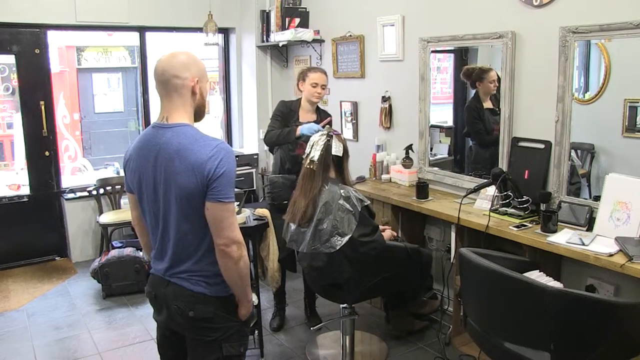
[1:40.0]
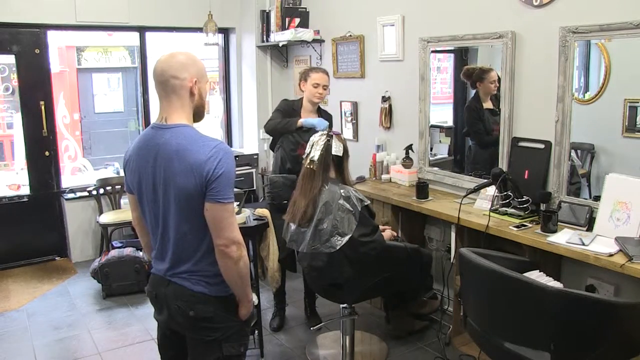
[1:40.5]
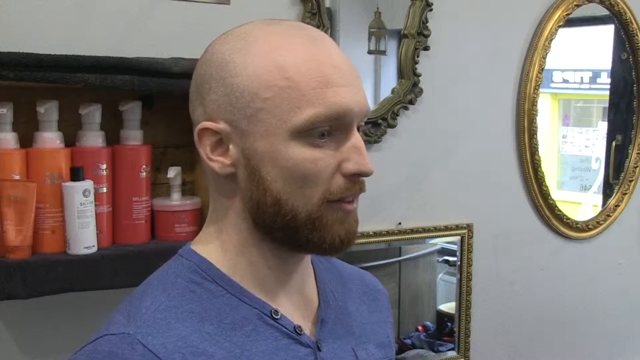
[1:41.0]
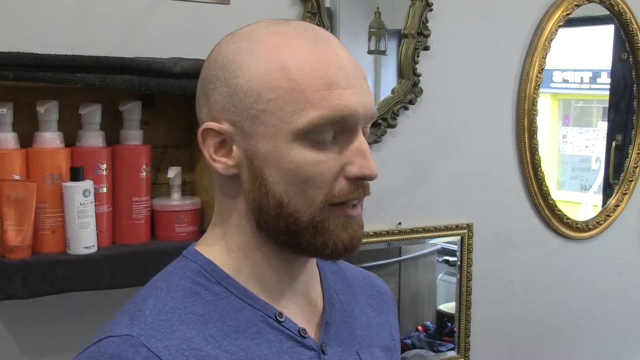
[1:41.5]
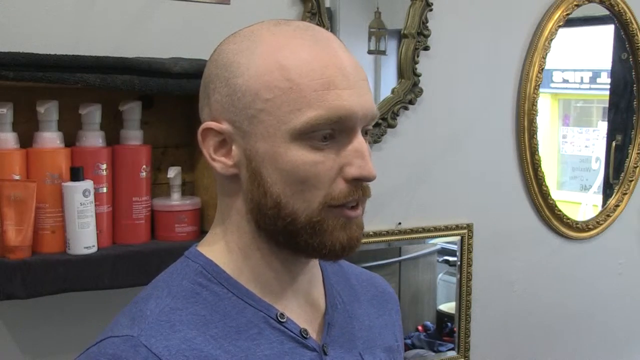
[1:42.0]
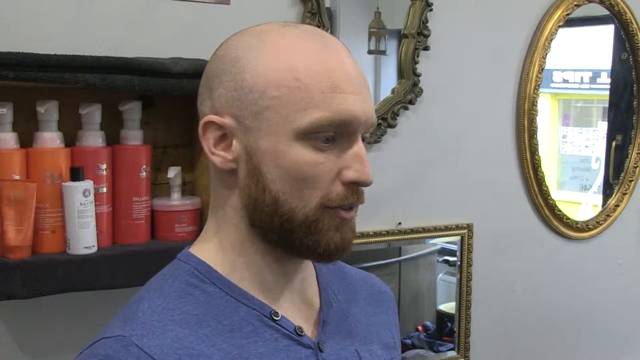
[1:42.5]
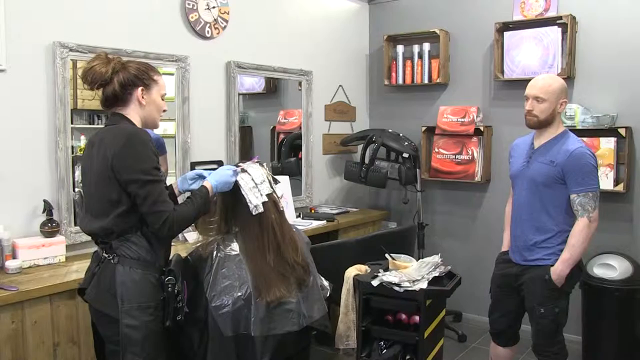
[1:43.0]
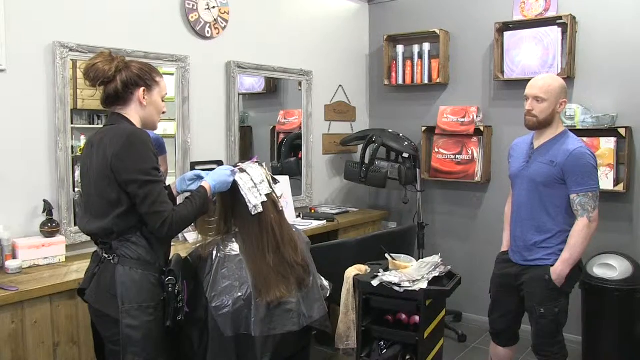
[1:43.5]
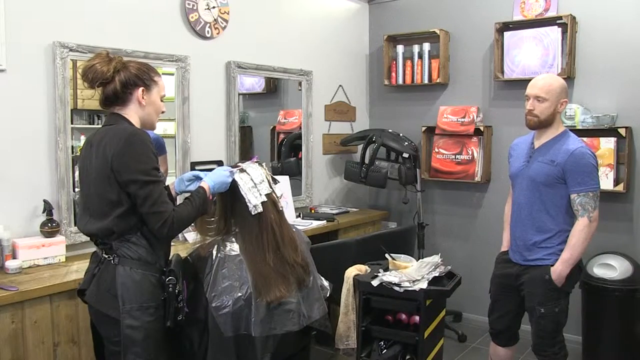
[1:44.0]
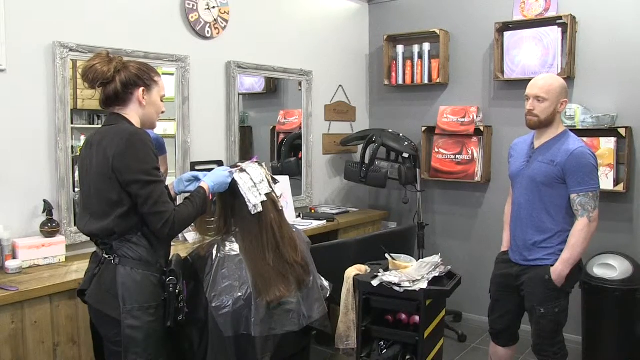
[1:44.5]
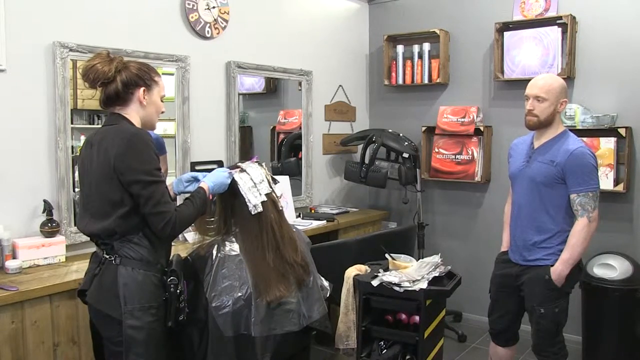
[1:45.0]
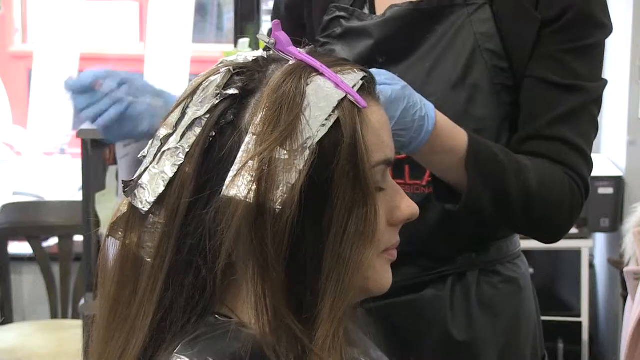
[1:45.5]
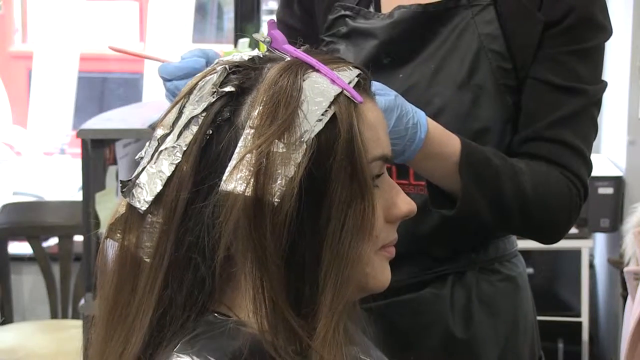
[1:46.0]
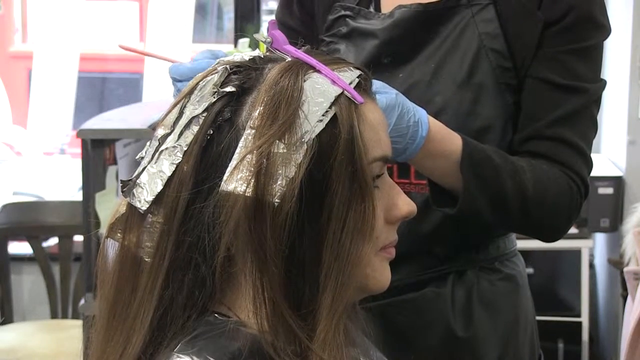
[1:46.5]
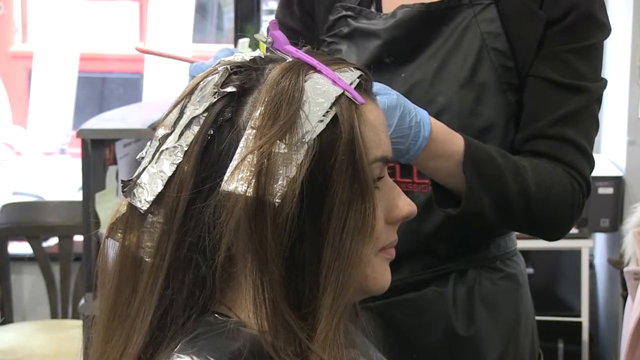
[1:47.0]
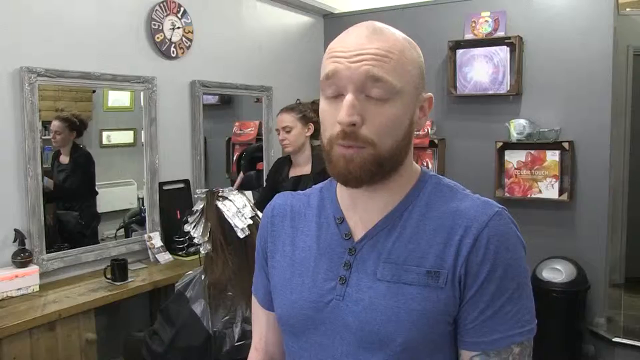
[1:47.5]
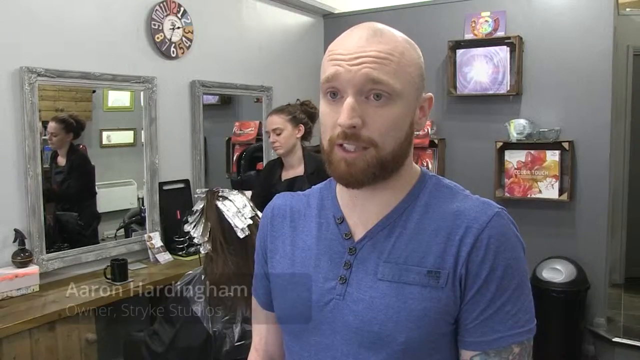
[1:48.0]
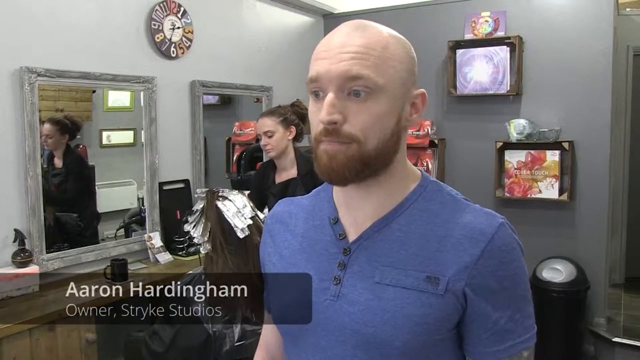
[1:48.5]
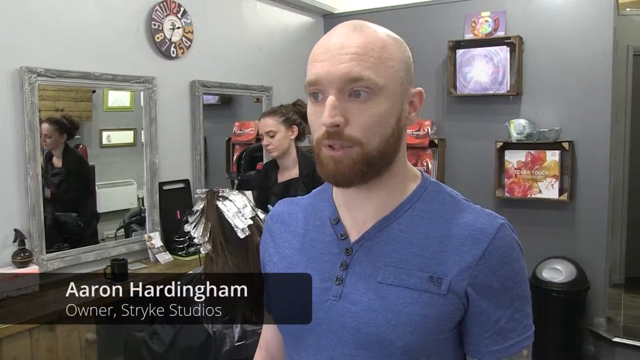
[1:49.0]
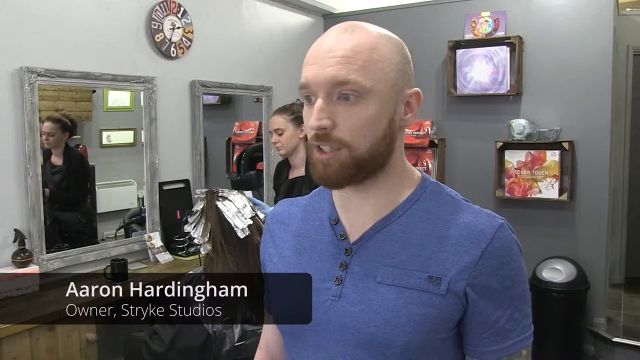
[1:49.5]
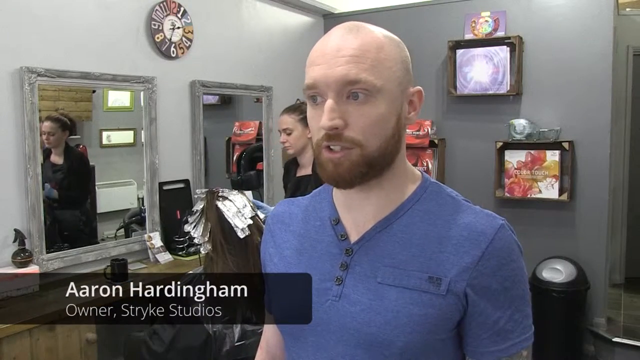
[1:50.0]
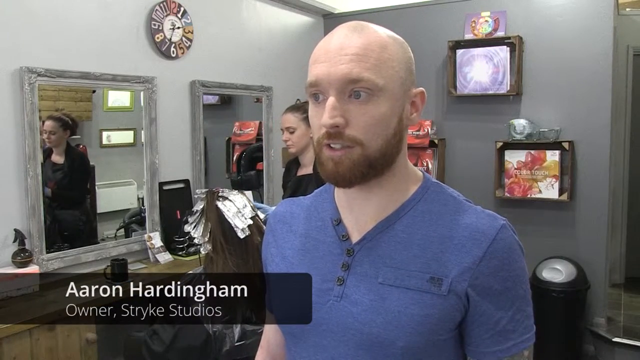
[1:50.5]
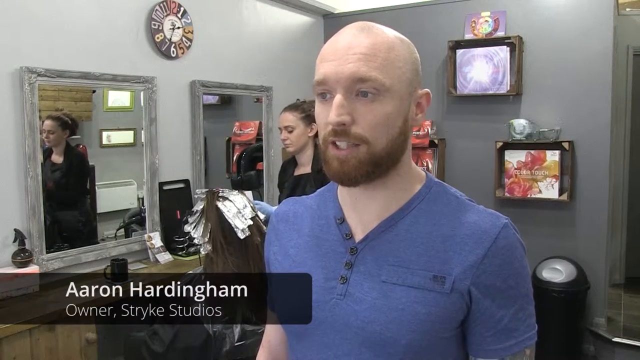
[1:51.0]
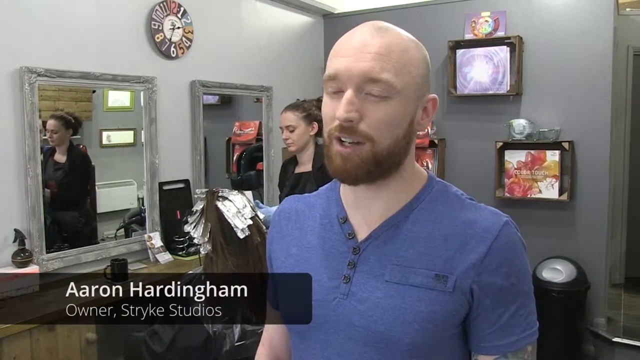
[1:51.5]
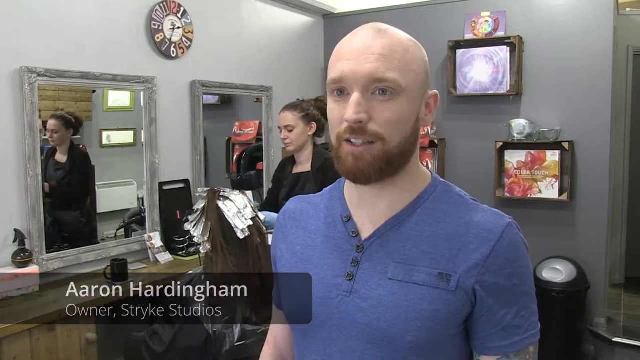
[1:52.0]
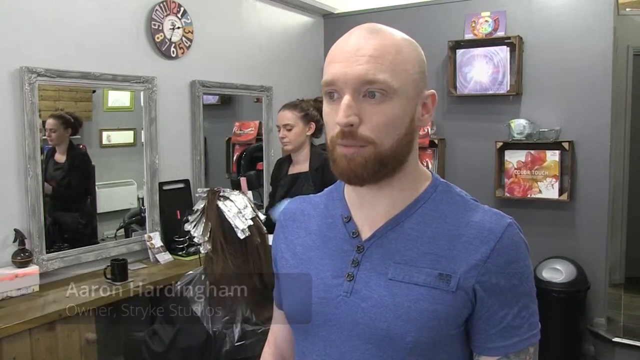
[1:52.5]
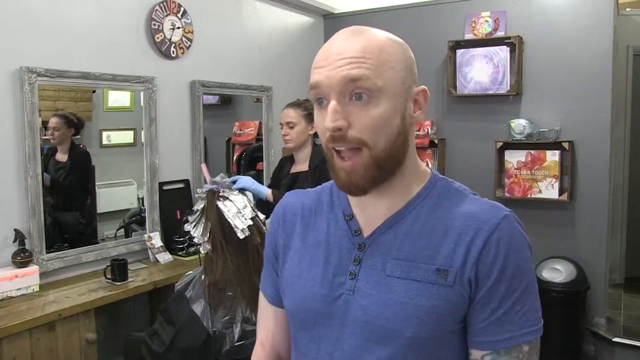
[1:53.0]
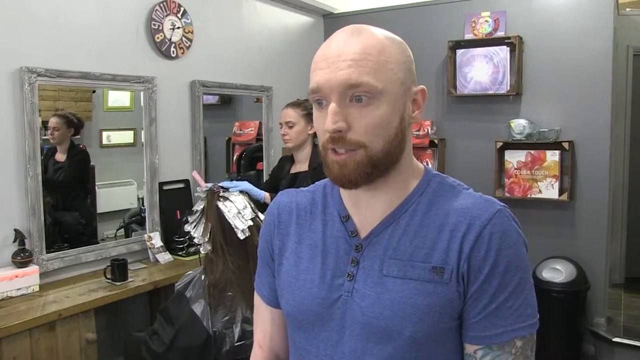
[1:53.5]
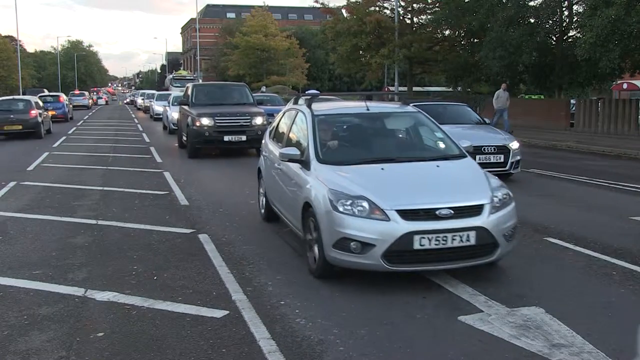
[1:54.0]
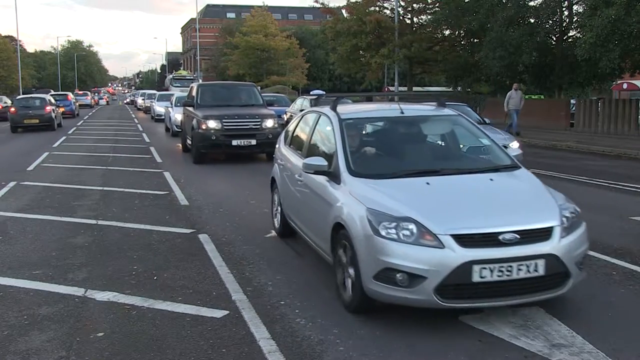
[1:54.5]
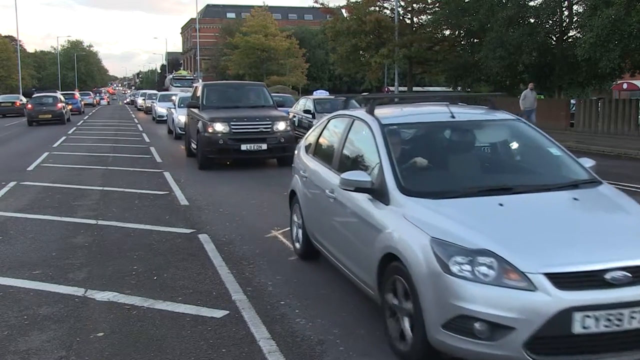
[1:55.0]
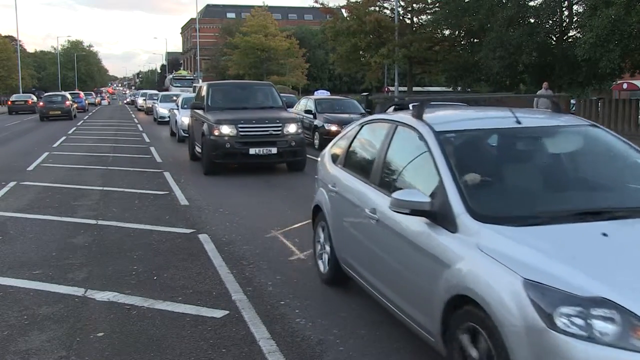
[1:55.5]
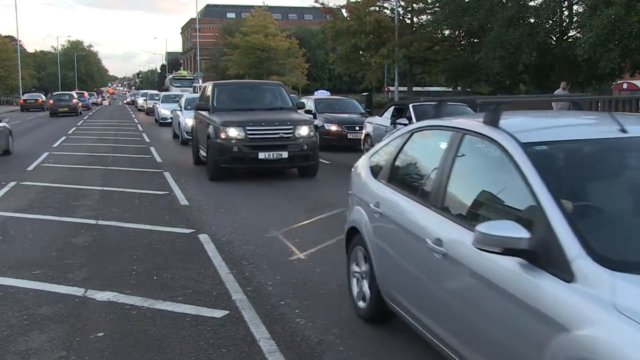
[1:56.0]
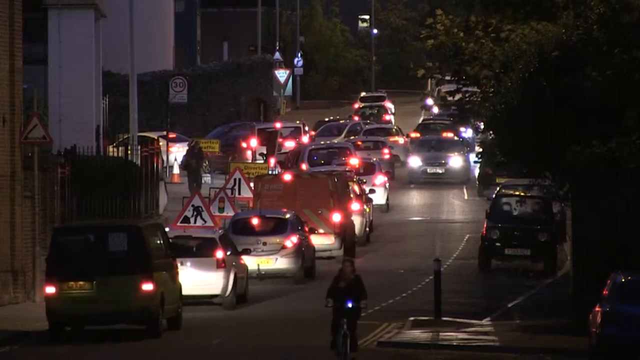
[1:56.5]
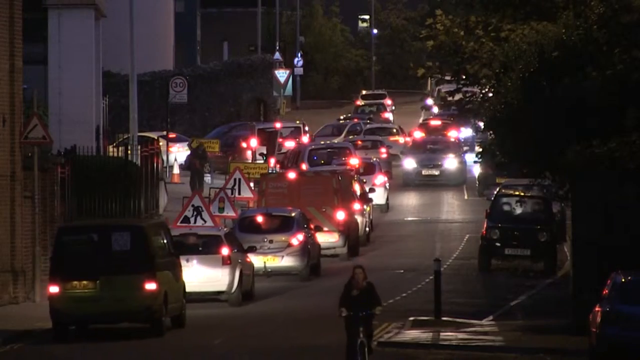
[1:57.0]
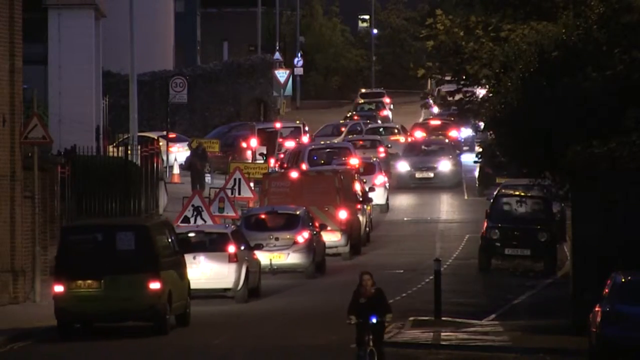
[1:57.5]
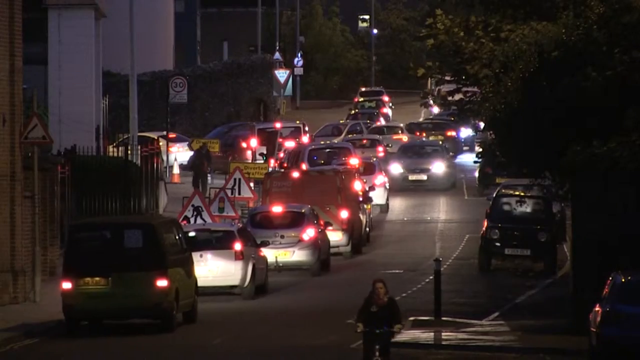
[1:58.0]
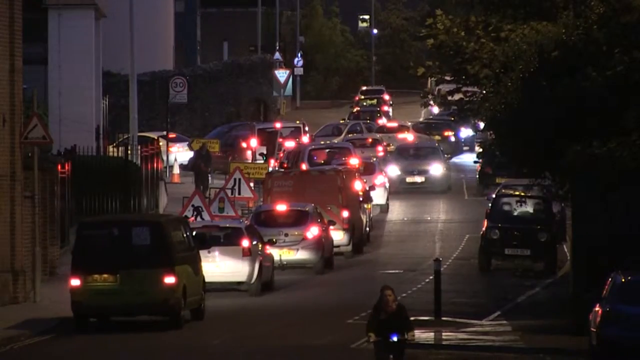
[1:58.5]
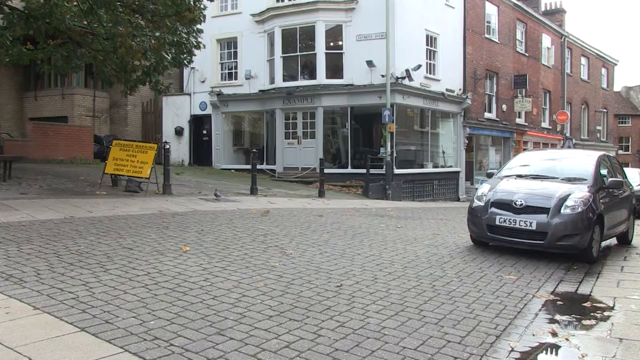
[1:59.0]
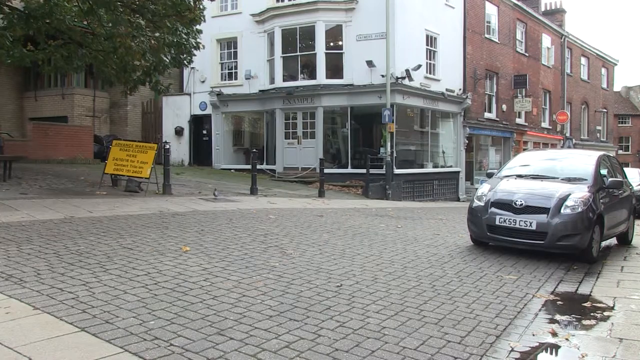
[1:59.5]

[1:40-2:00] In the salon, the man in the blue shirt, who has tattoos on his arm, is interviewed; his name is labelled as "Aaron Hardingham". The women in the background continue with hair colouring and styling. The woman there wears black, and the salon has gray walls, a big wall clock with some framing in the background, and a visible bin. Aaron is bald with a beard. The camera then pans back to the traffic outside, where cars move slowly with their lights on as the traffic continues into the evening. The scene changes three times, and the camera movements are steady.